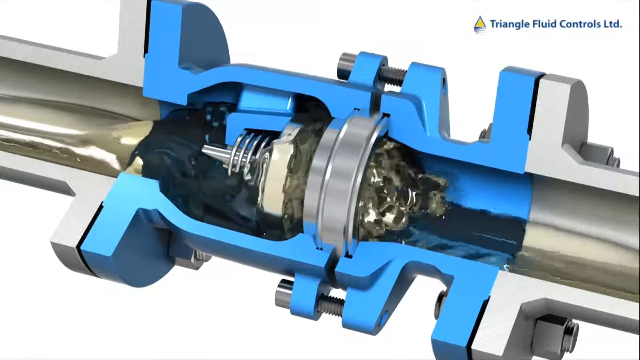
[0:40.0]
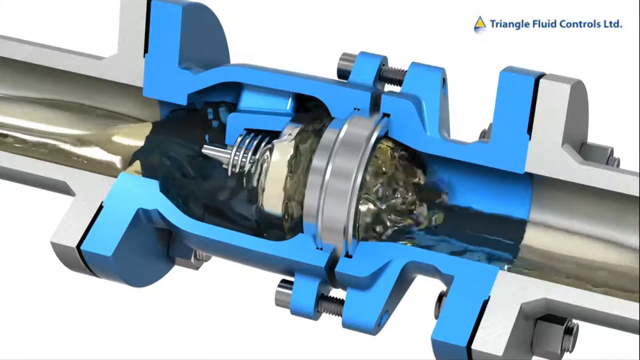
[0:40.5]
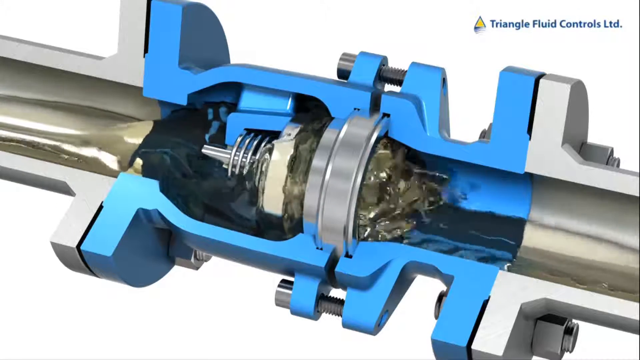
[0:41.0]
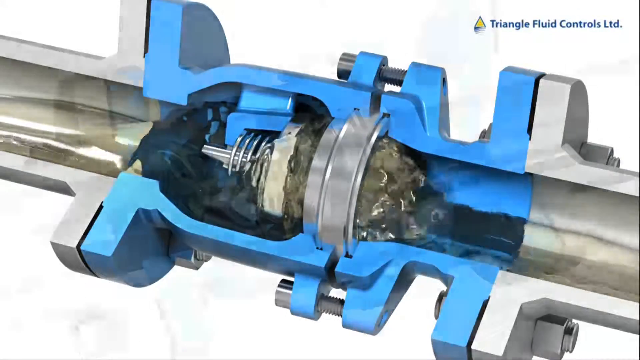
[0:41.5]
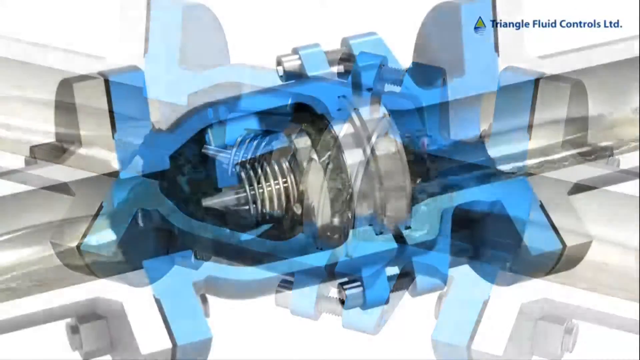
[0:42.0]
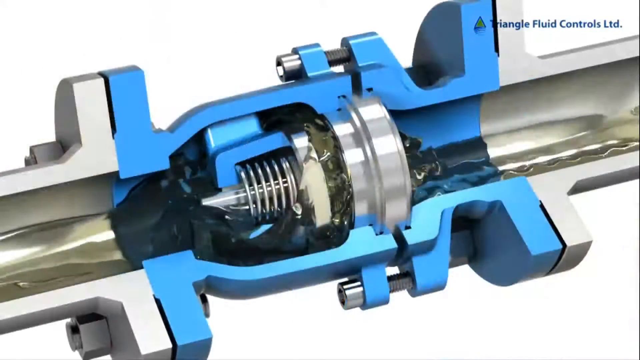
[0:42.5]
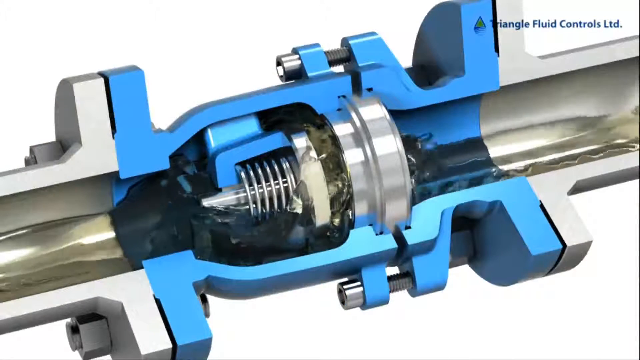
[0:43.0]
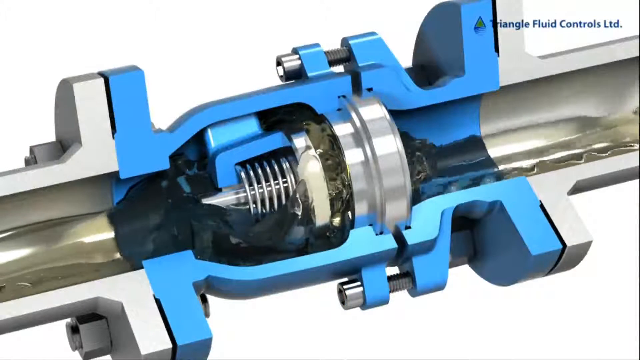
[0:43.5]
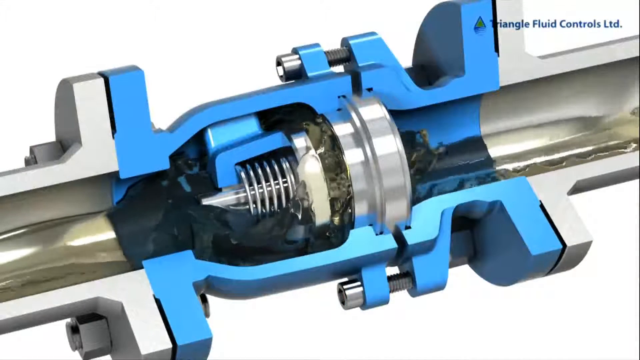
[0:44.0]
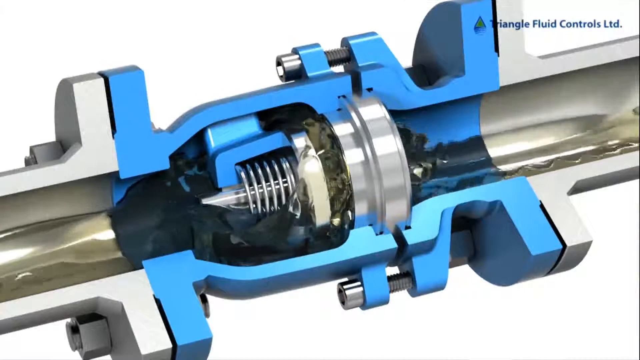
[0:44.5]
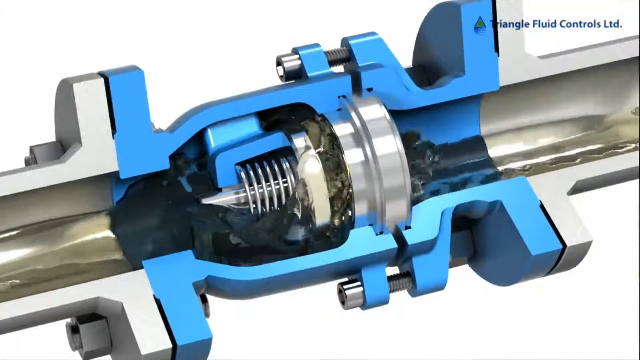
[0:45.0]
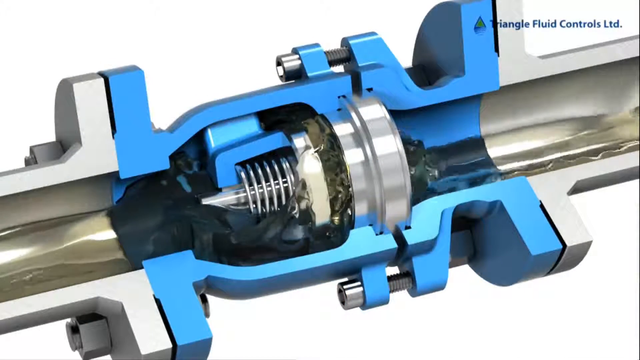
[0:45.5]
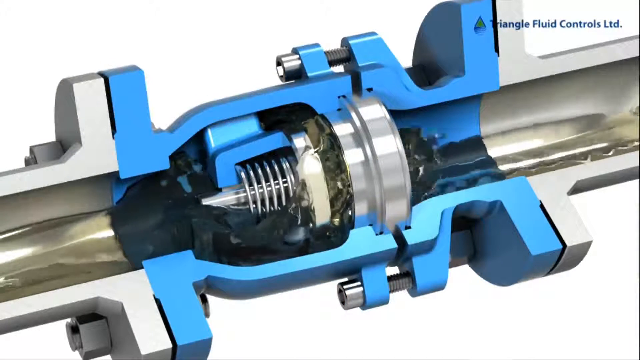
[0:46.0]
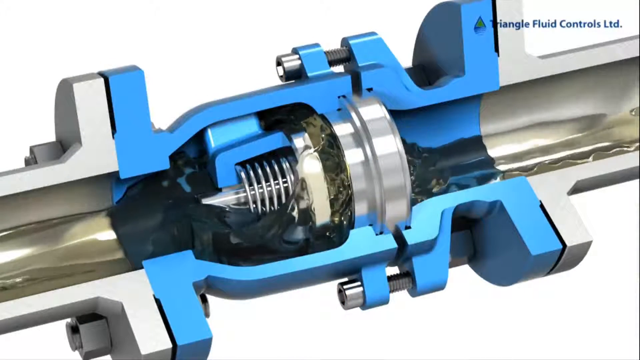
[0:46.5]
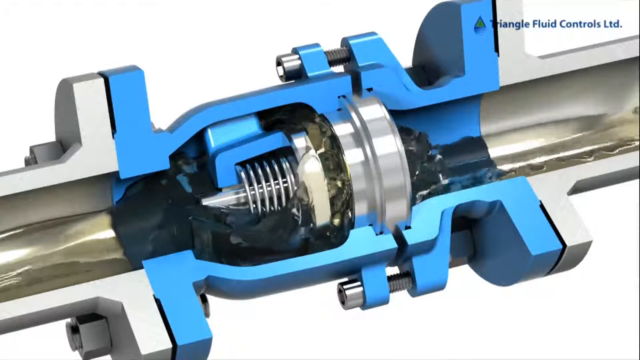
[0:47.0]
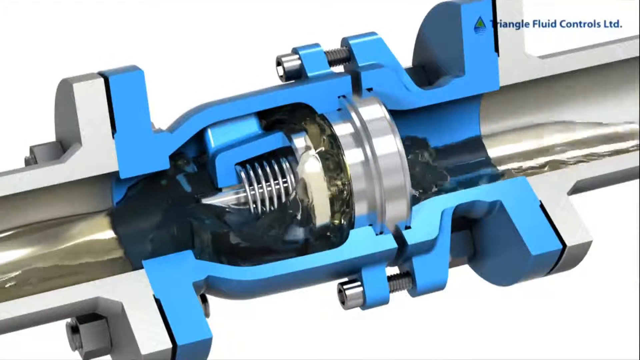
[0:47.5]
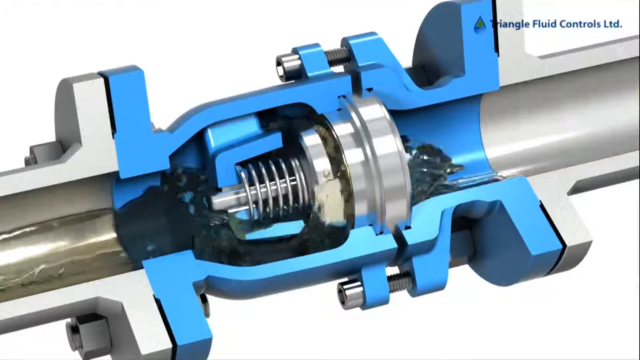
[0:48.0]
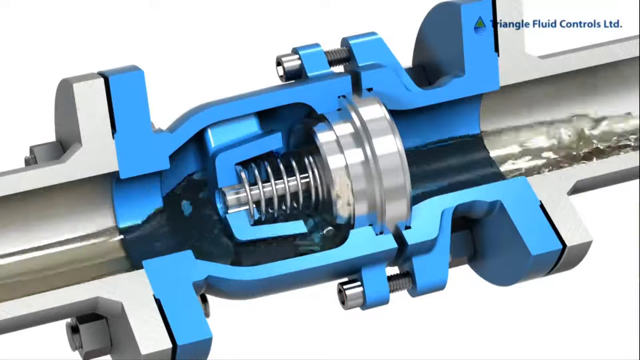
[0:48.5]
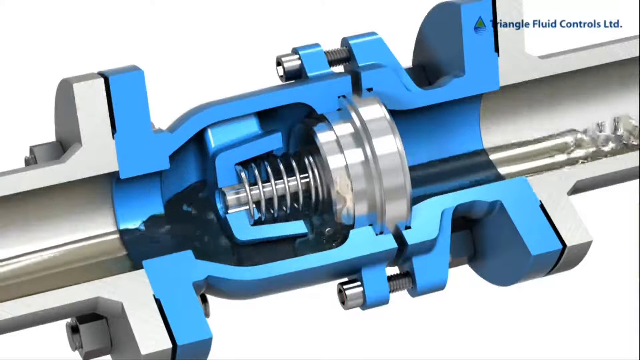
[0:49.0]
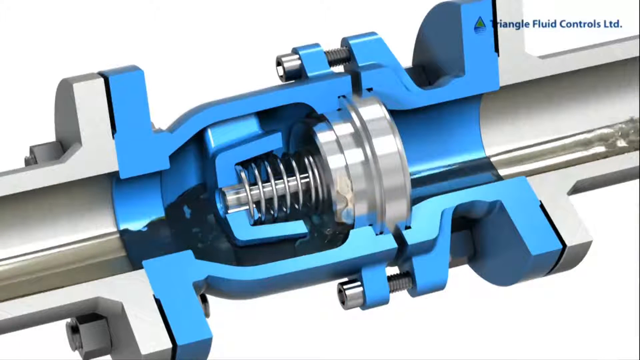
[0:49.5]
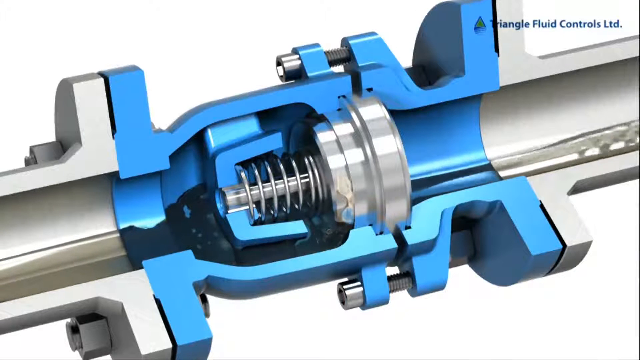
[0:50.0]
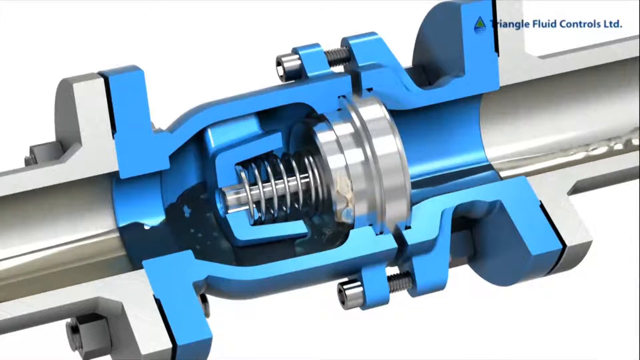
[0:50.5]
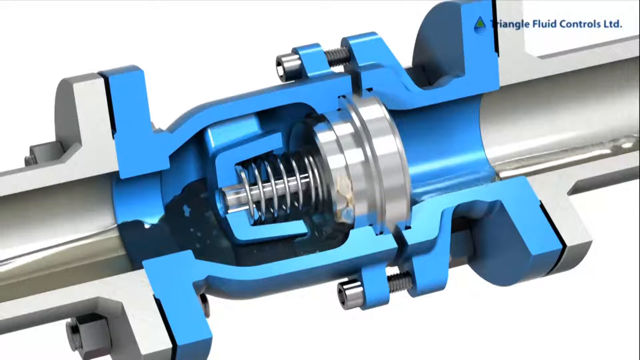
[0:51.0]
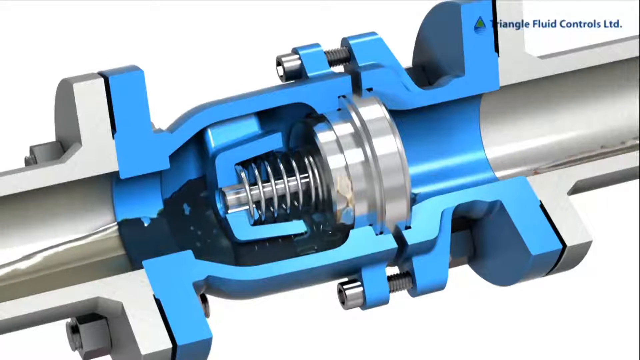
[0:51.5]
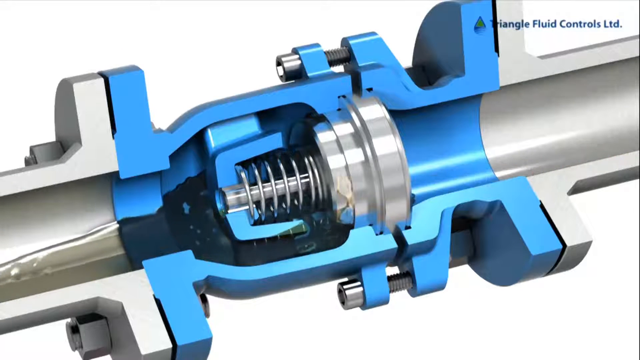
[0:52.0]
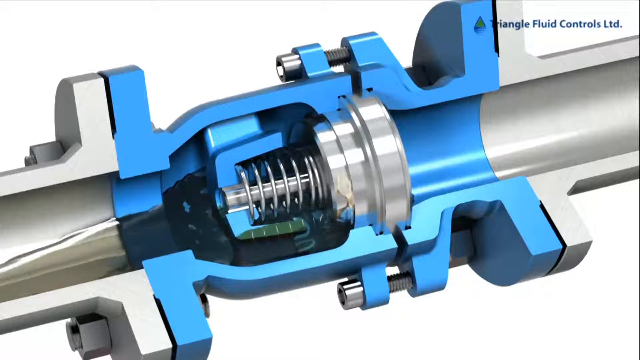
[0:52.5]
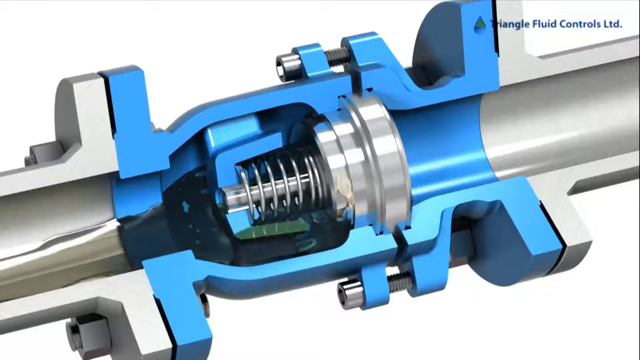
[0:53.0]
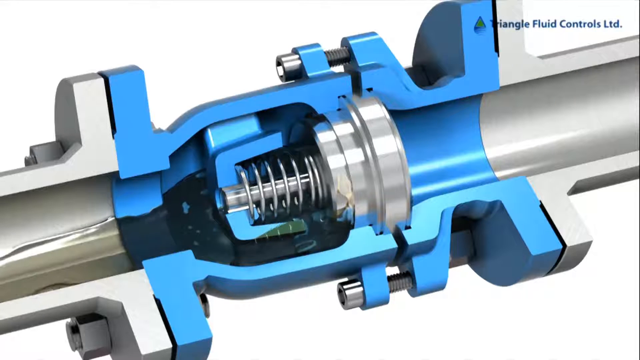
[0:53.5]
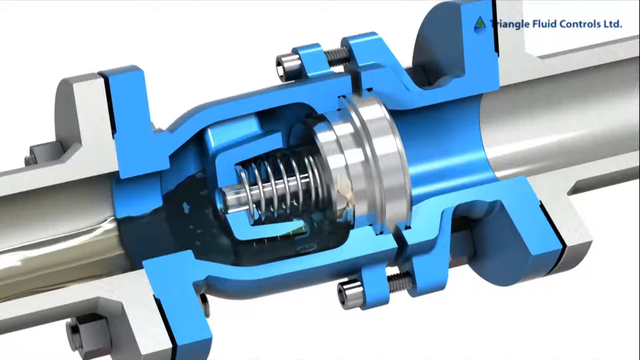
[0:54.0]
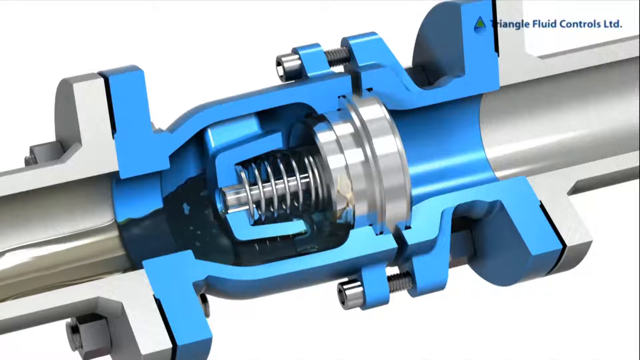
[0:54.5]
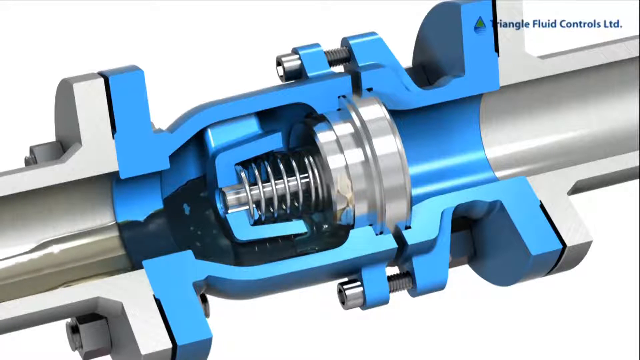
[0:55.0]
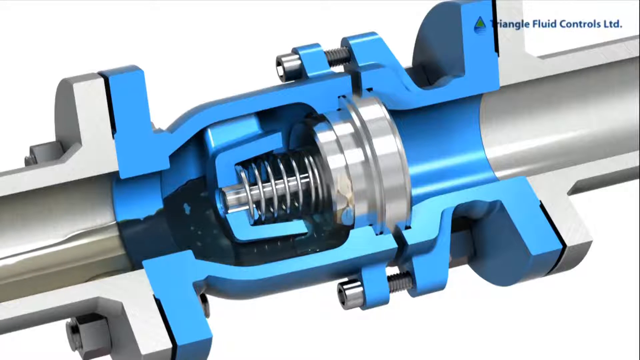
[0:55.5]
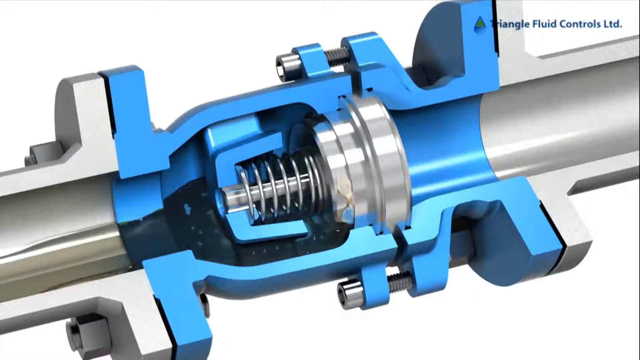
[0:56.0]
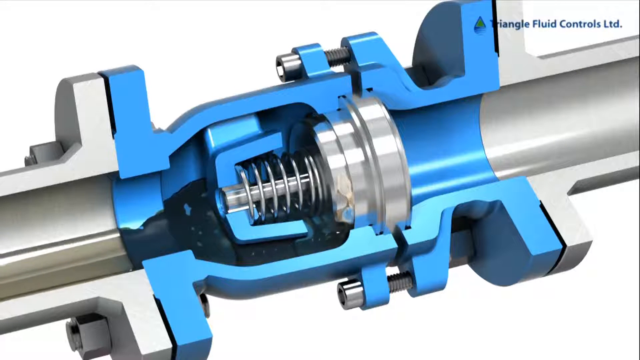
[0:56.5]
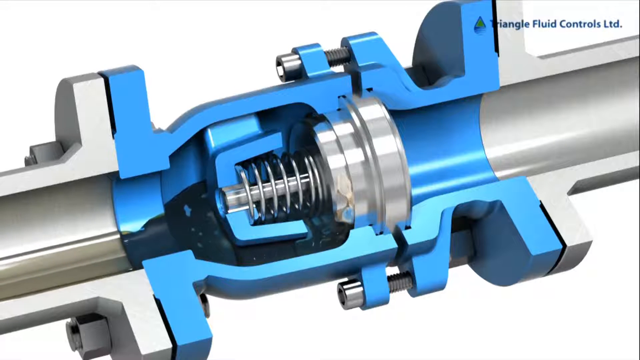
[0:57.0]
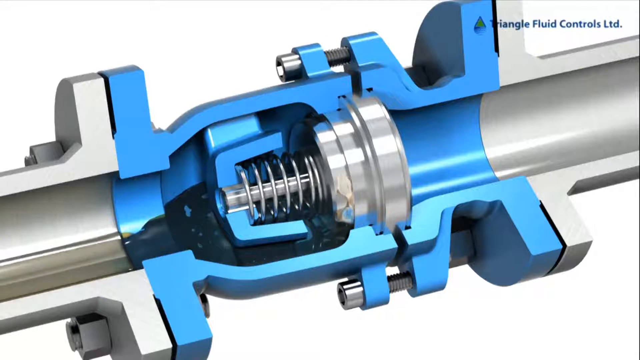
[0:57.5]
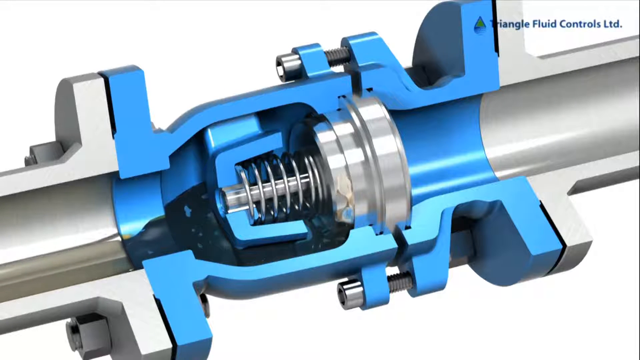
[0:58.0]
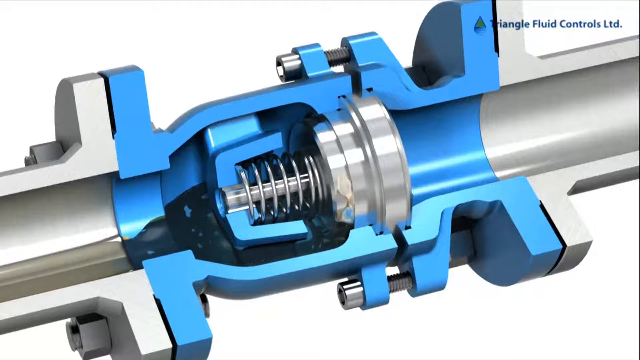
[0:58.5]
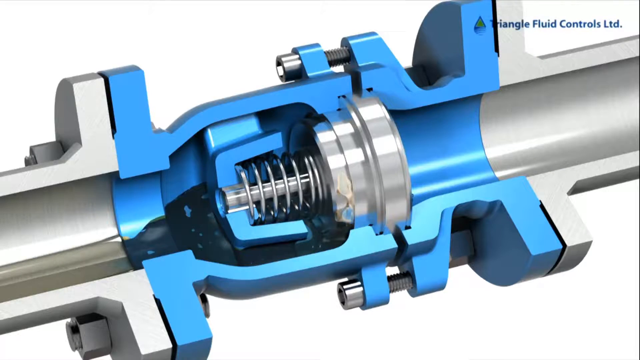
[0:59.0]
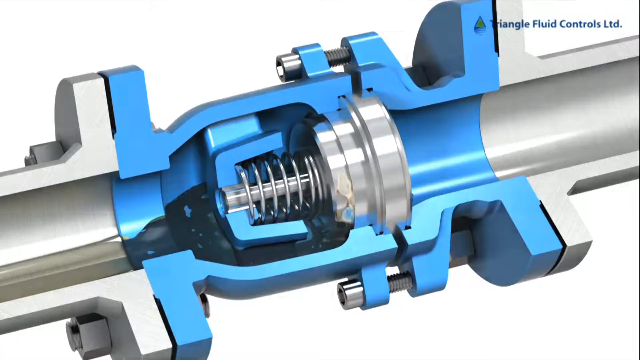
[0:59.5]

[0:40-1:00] When the spring is compressed, the fluid passes quickly to the other side; when the spring is released, no more fluid comes through, but the fluid already on the far side of the spring keeps flowing onward. The fluid only passes when the spring is compressed. It passes fast beyond the spring because it is not level but flows down a steep slope, going down to the other side of the spring.